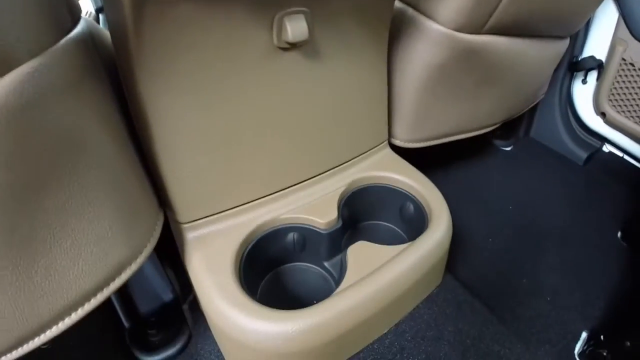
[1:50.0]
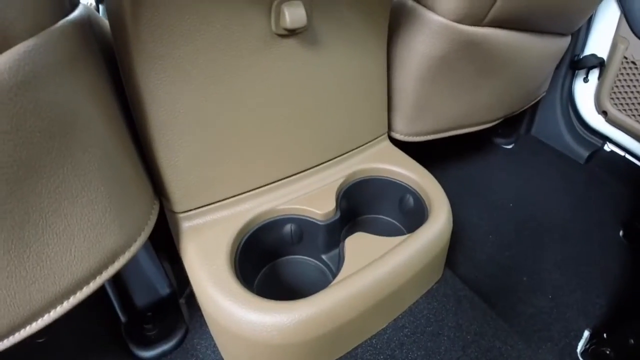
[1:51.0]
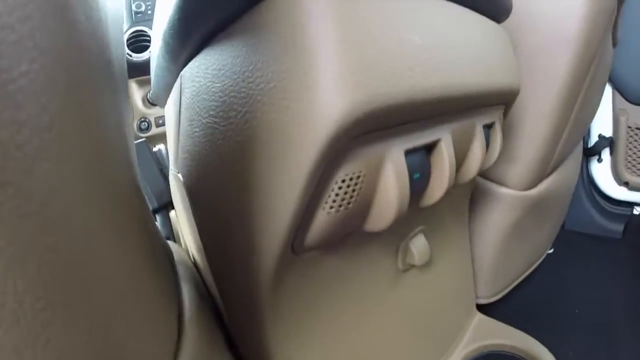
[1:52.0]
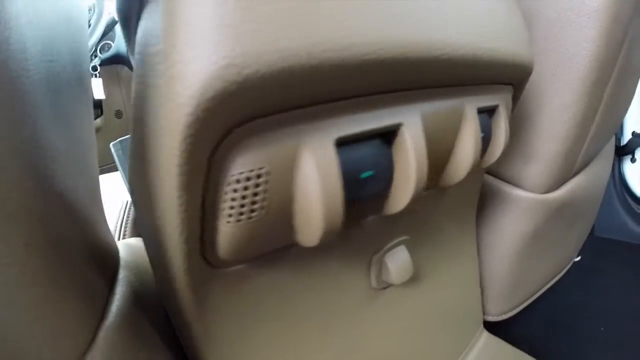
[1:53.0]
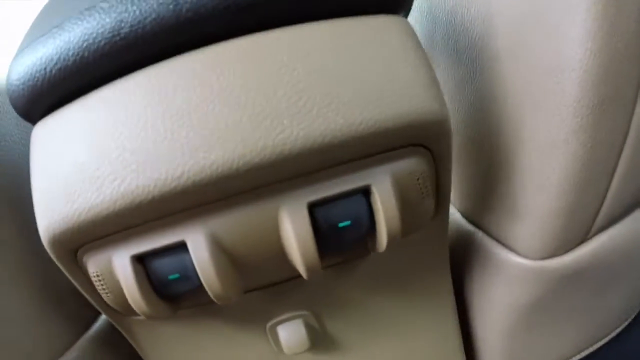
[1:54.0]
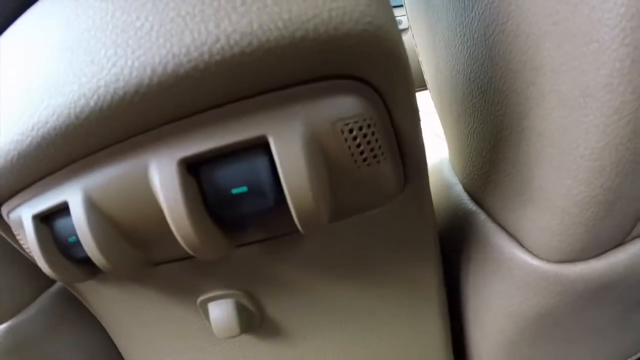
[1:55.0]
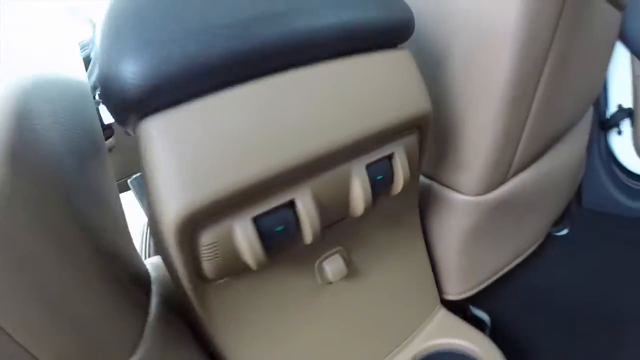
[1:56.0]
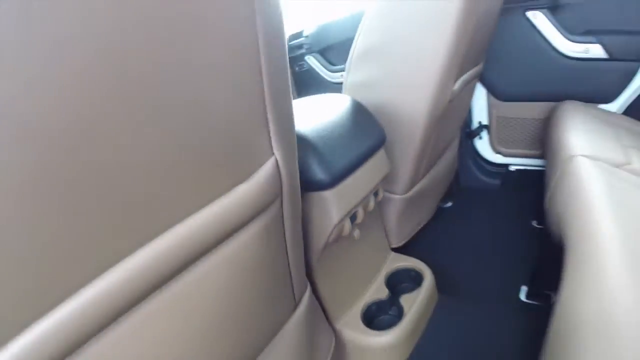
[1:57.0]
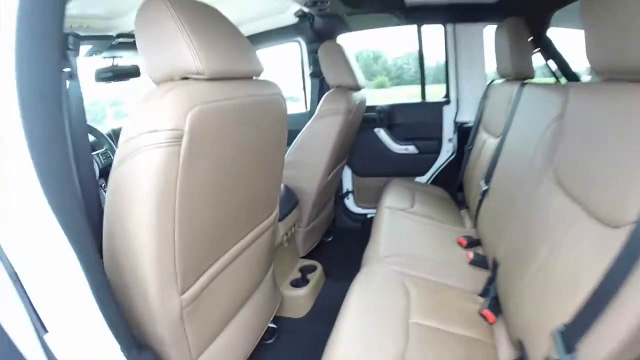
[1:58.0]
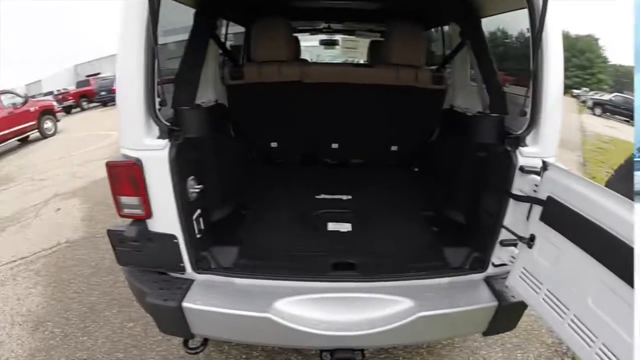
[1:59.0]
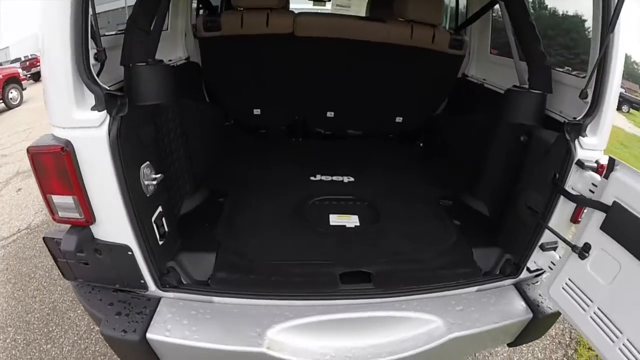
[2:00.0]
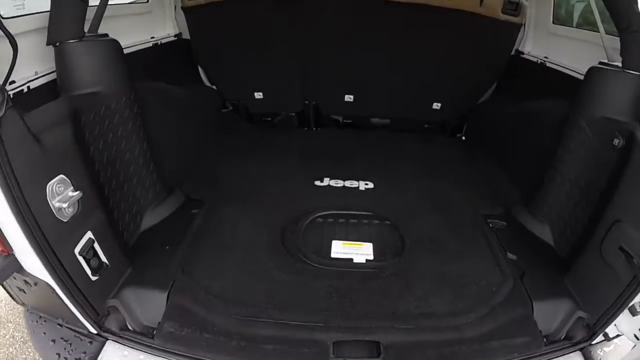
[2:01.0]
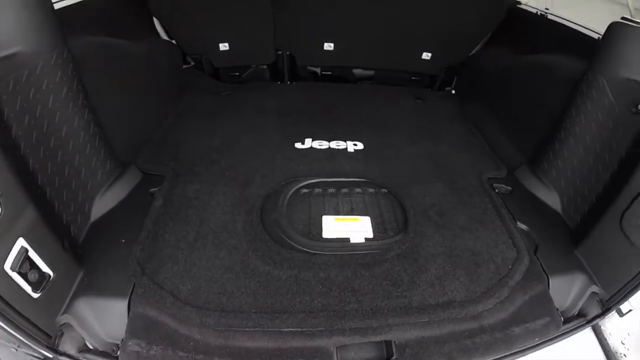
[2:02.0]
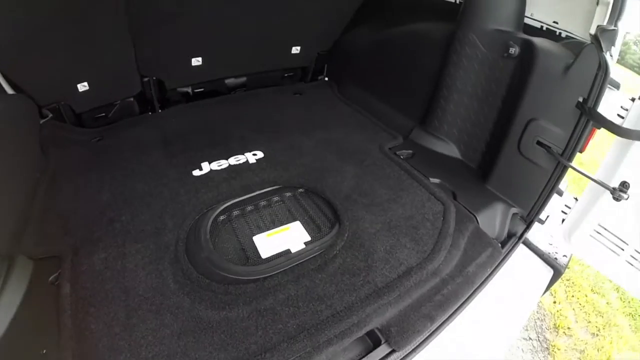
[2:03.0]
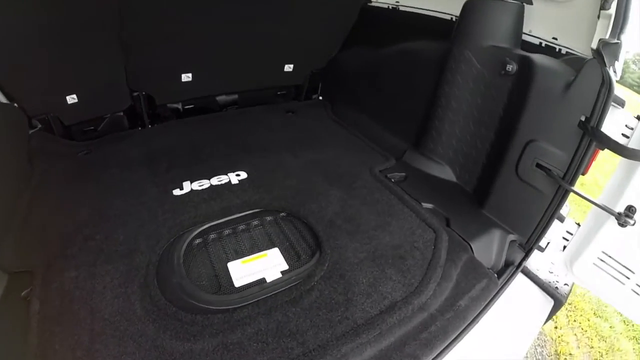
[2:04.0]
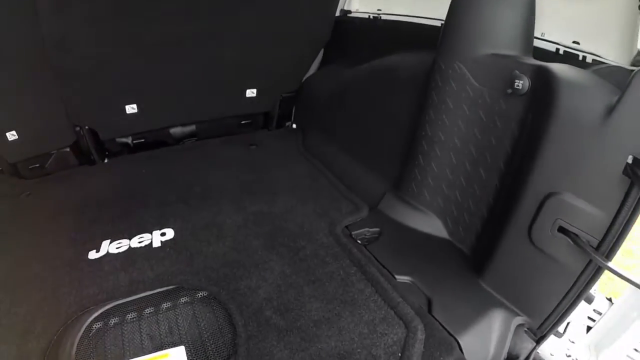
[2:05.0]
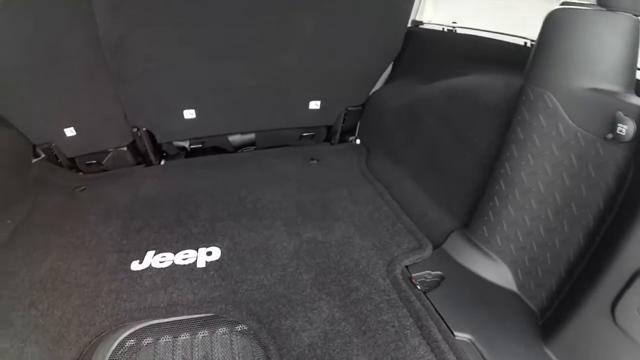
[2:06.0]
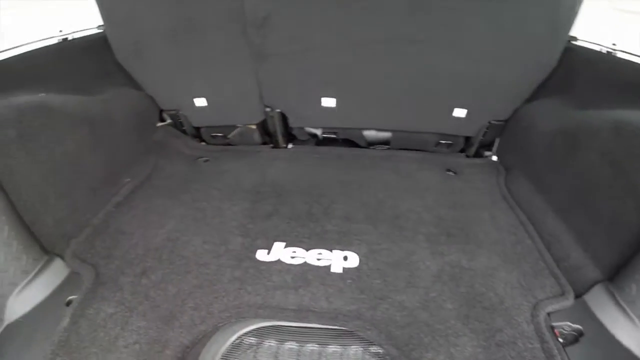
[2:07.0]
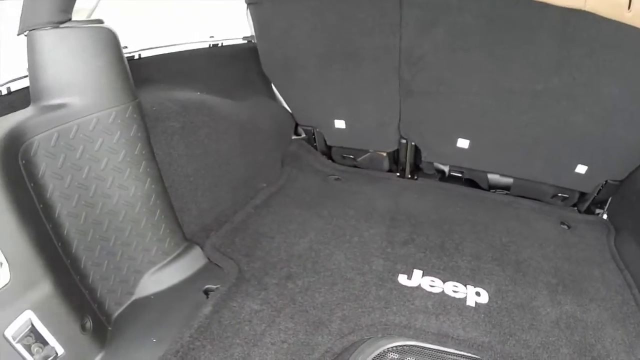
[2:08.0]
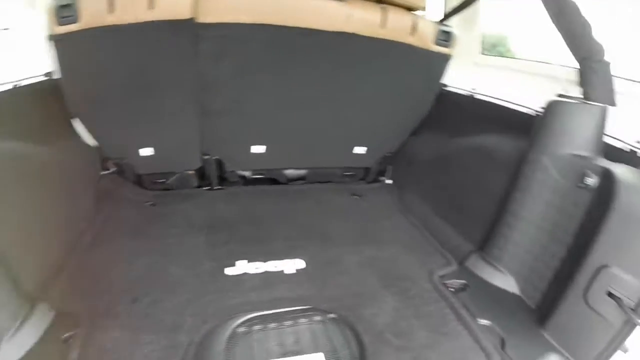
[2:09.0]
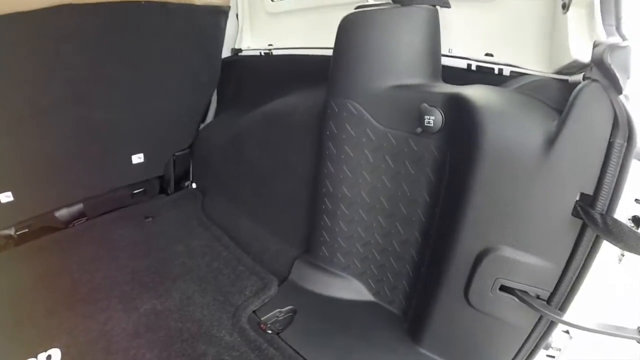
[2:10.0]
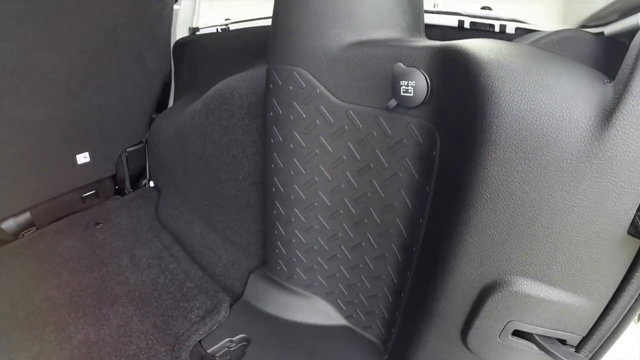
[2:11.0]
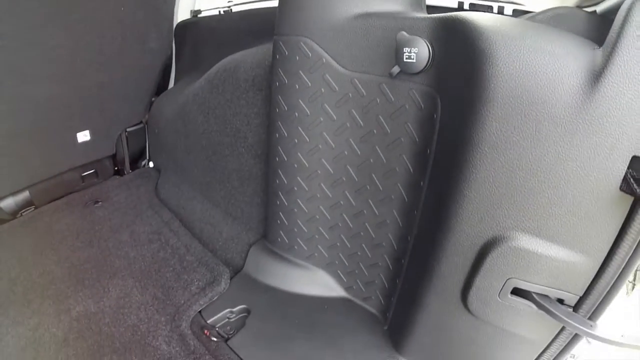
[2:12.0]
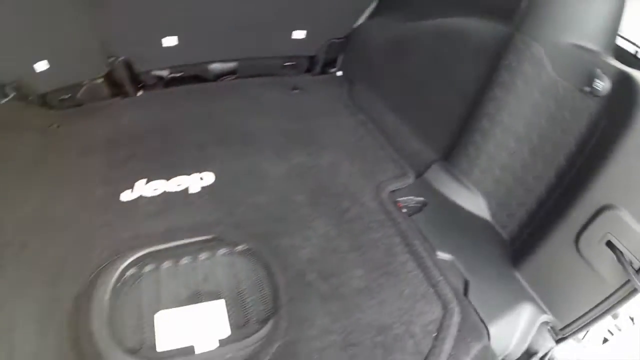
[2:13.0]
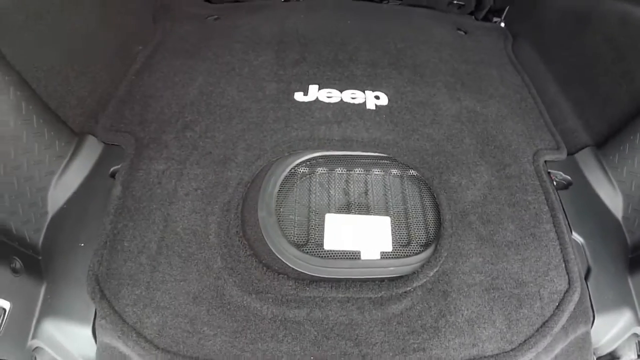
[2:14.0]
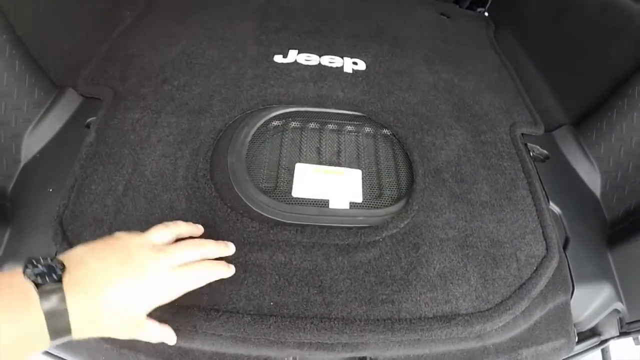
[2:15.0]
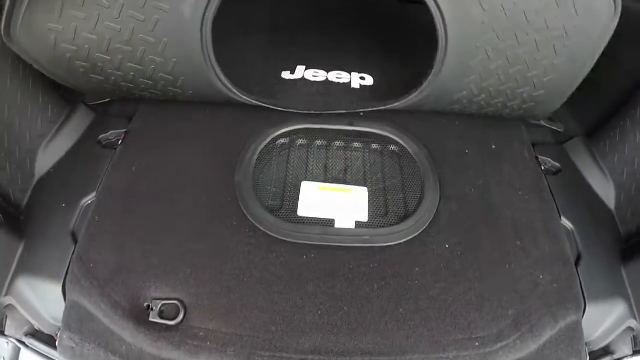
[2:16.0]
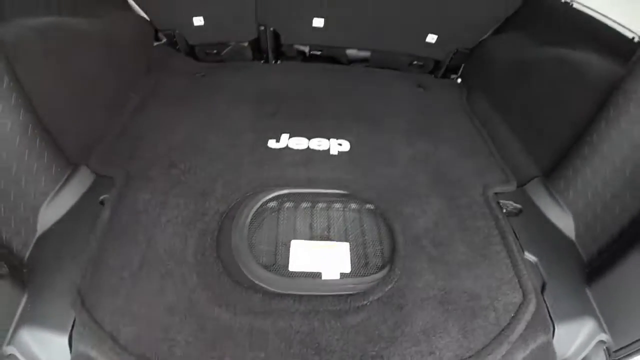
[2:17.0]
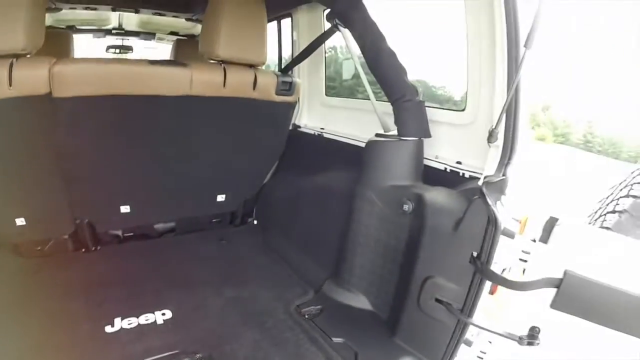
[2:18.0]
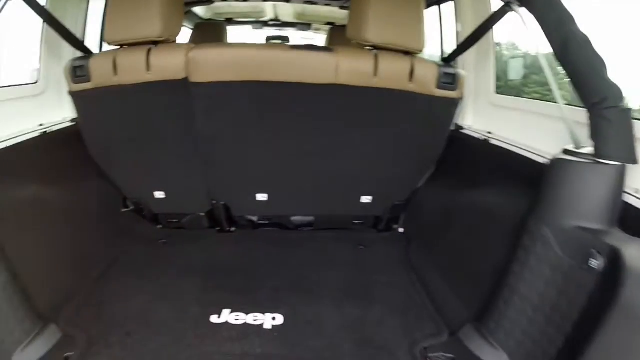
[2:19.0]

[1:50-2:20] Inside the Jeep, a cup holder in the back seat console area holds two cups; its inner part is black and its outer part is beige. Vents on the left and right sides of the back are shown. Then the camera moves into the trunk, the back area of the Jeep, which looks brand new. The interior there is black, and the carpeted area is shown being lifted up to reveal storage space. Most of the interior is beige leather, but the trunk area is mostly black.